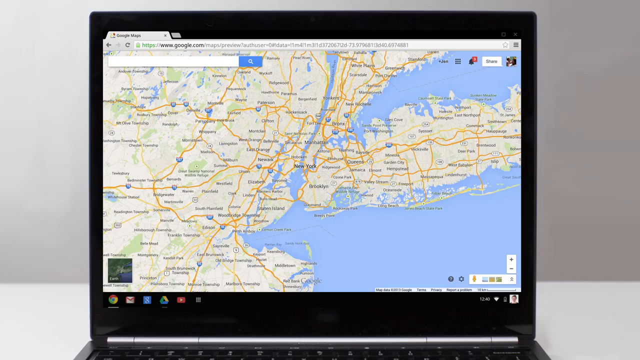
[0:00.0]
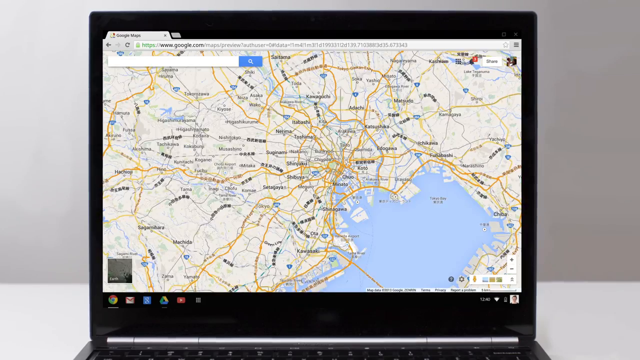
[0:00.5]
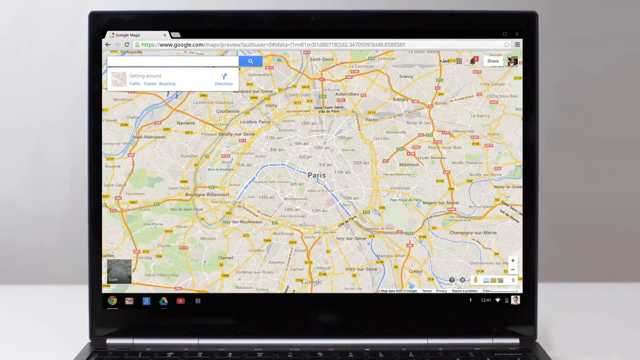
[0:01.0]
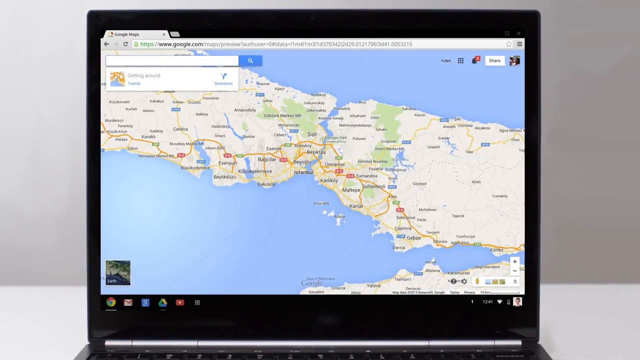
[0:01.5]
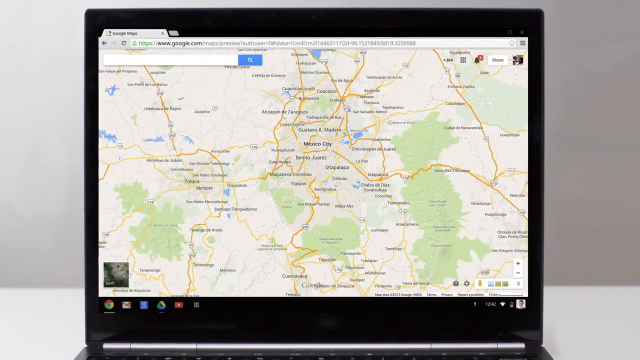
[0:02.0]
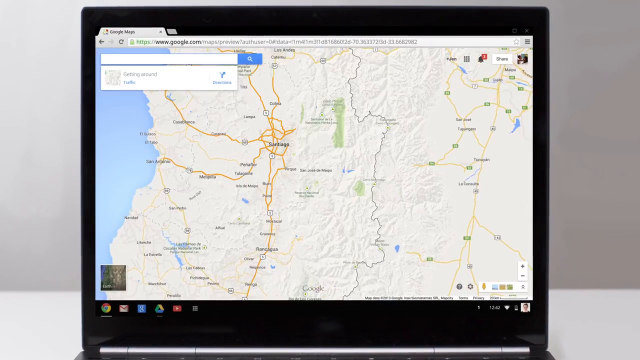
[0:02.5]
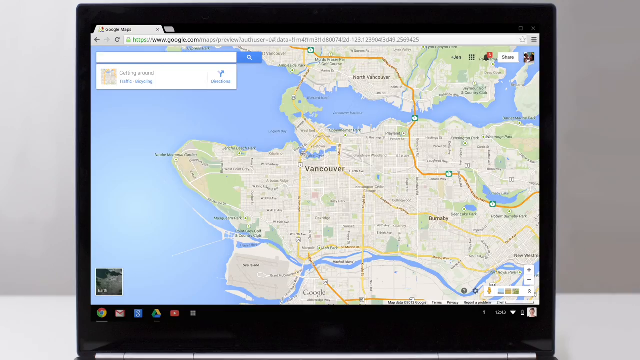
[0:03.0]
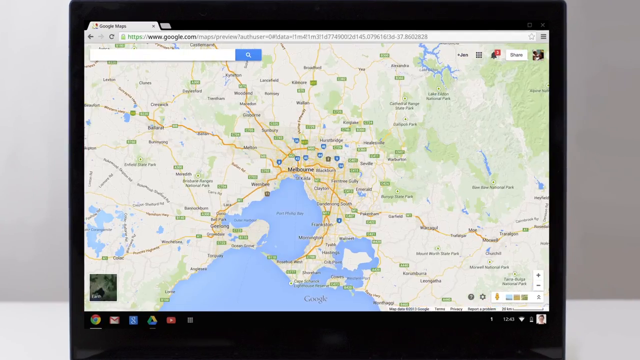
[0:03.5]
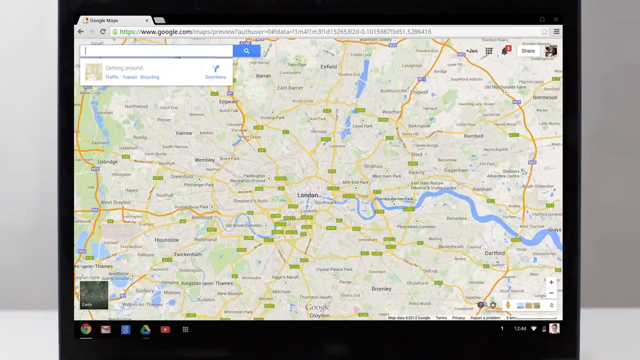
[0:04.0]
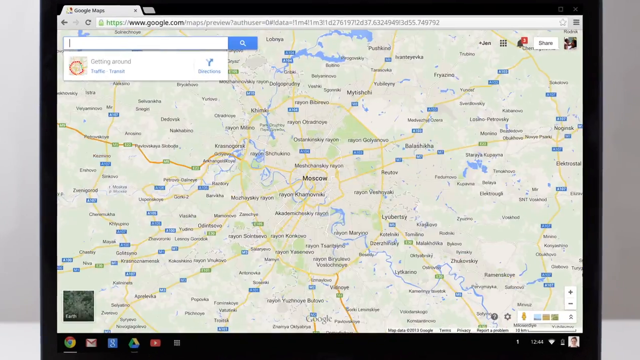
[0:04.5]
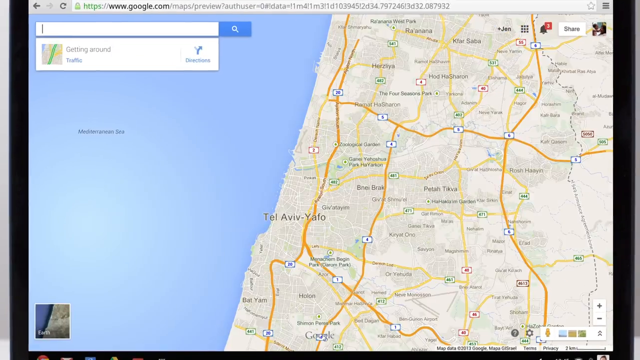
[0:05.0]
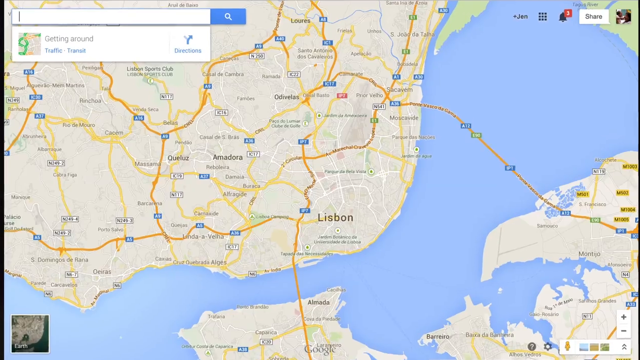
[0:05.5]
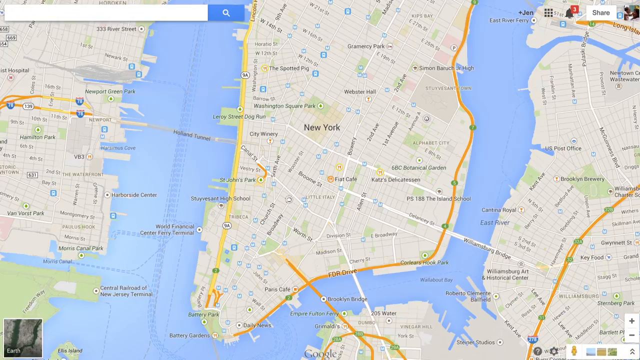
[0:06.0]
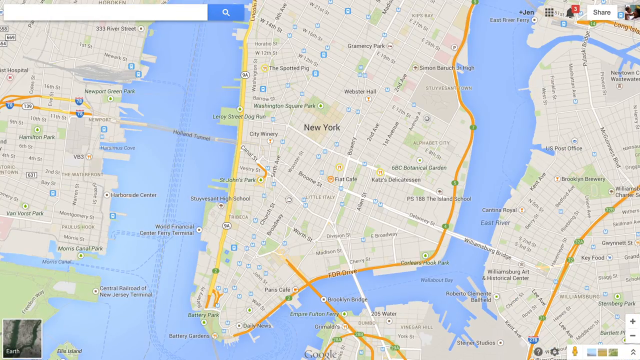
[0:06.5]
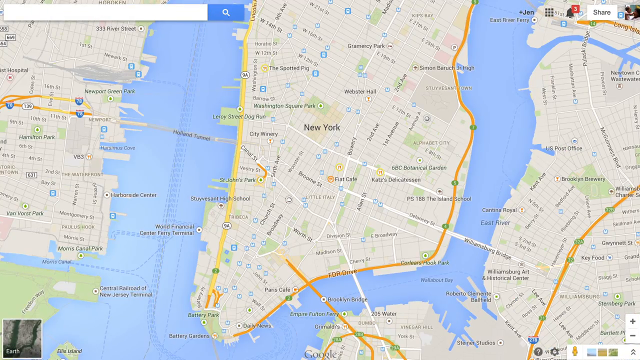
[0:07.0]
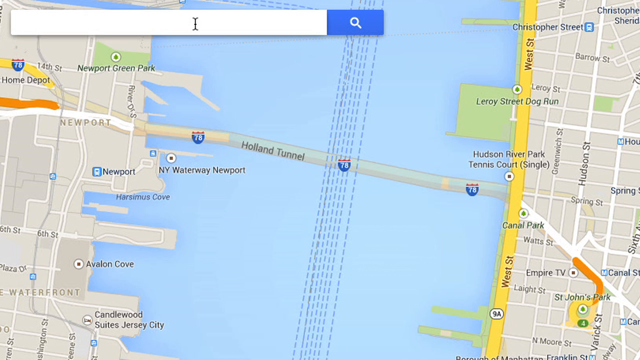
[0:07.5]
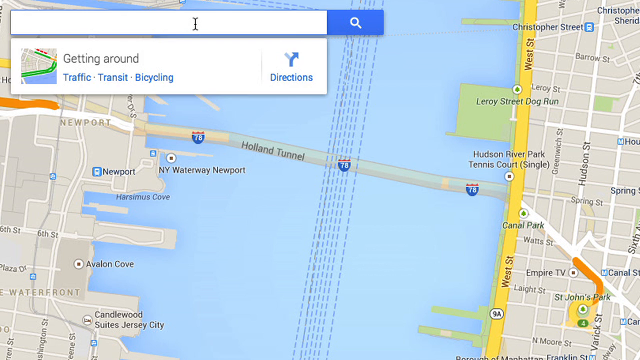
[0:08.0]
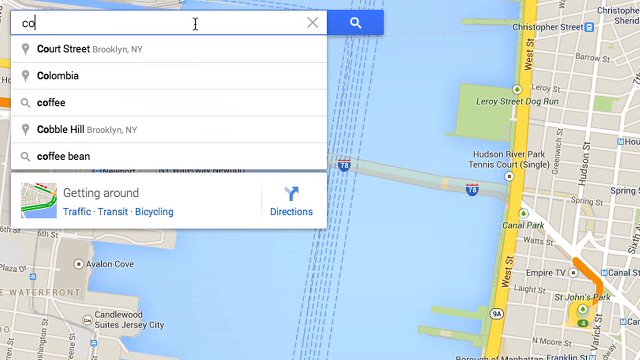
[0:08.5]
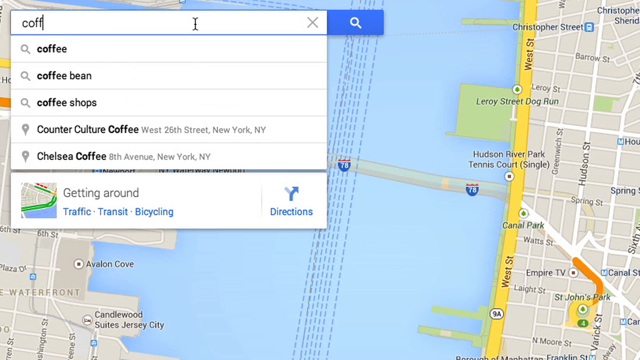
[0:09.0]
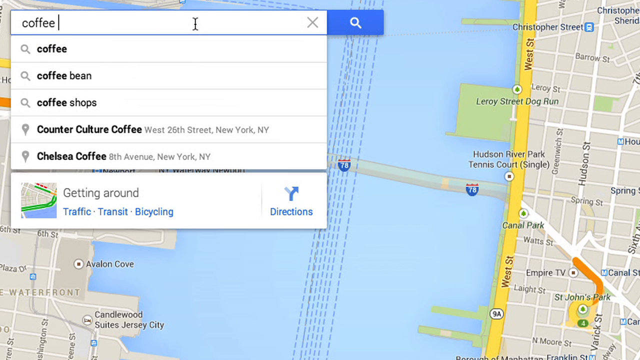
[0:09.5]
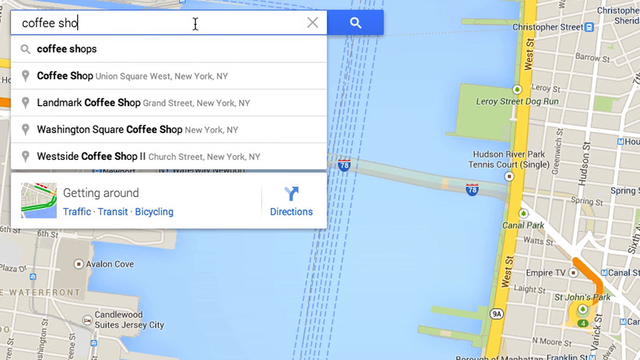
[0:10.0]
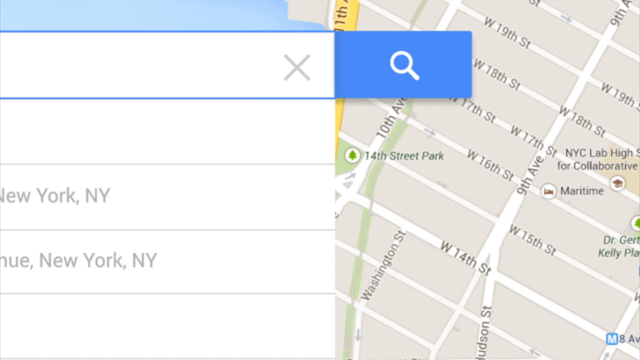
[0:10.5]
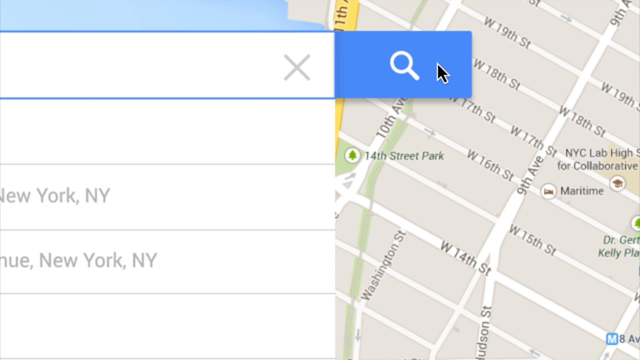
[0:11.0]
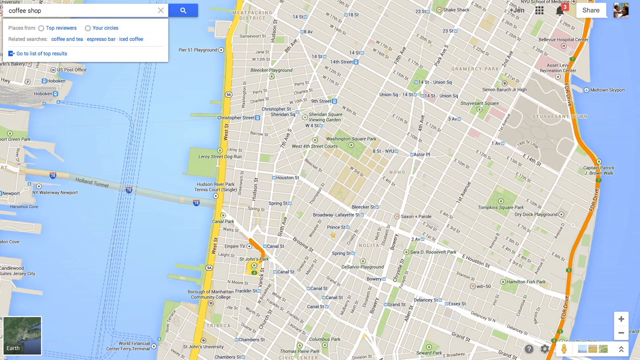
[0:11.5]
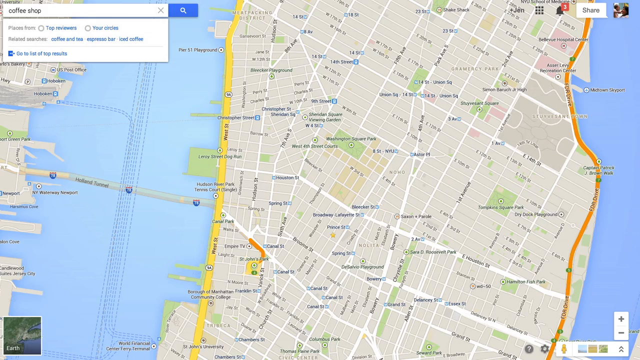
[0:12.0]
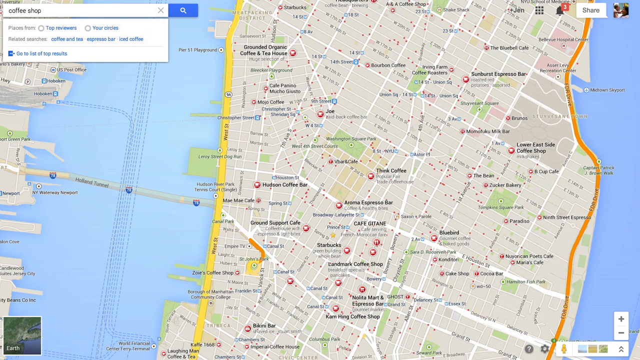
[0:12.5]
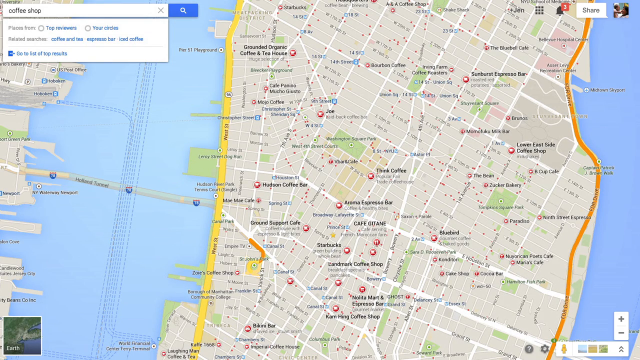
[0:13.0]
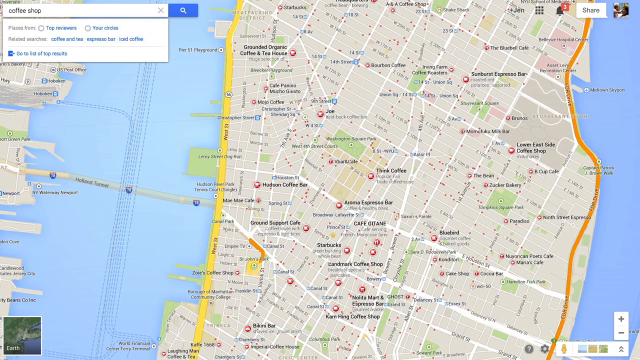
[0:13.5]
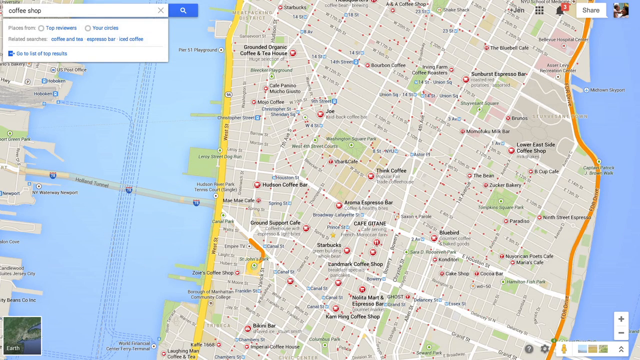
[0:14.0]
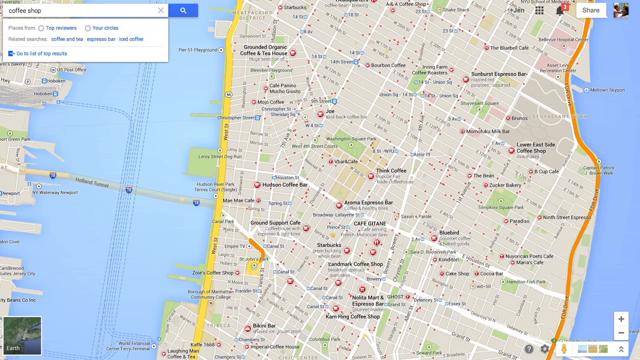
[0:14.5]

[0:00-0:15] A map flashes by rather quickly on a black laptop screen in a tour of the new Google Maps. "coffee shop" is being written into the text box of a search menu. Different aerial shots of different areas of the world appear, mostly apparently Europe and America: images that look like Lisbon and apparently Western Europe, and New York's Holland Tunnel. It is a typical Google Maps setup.